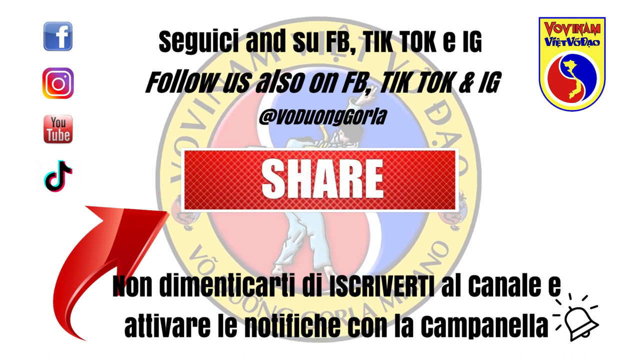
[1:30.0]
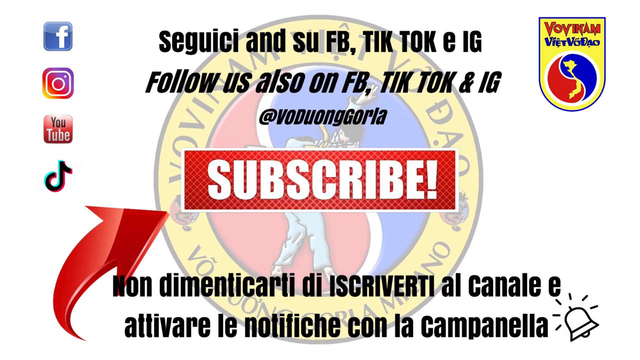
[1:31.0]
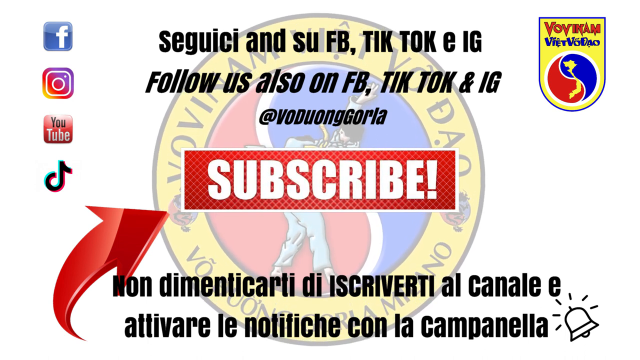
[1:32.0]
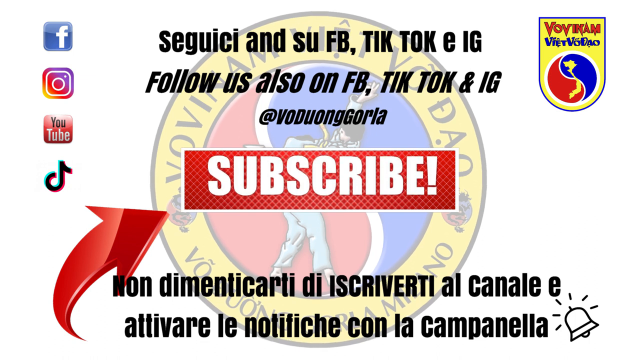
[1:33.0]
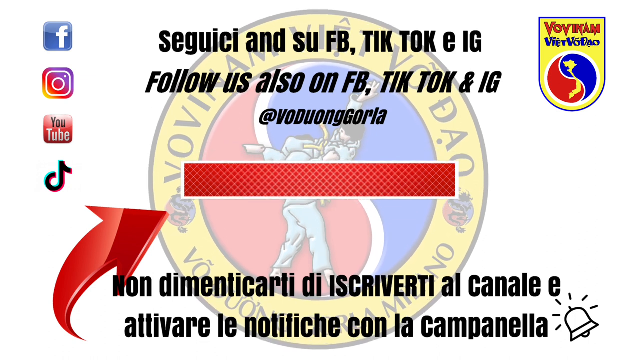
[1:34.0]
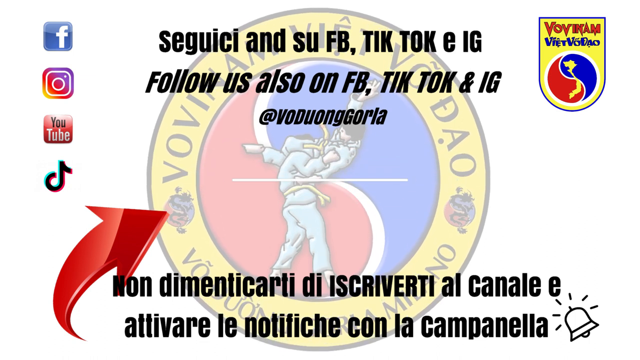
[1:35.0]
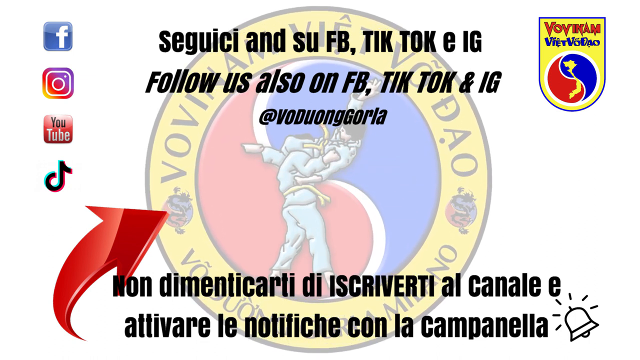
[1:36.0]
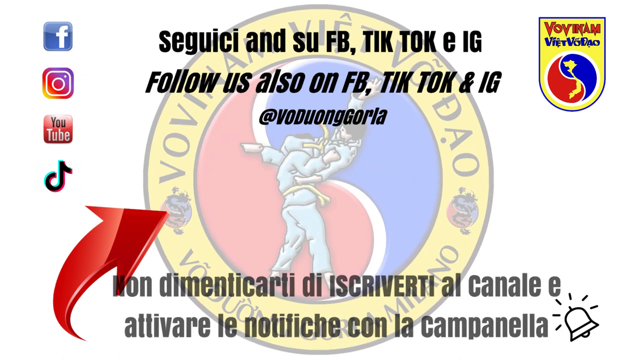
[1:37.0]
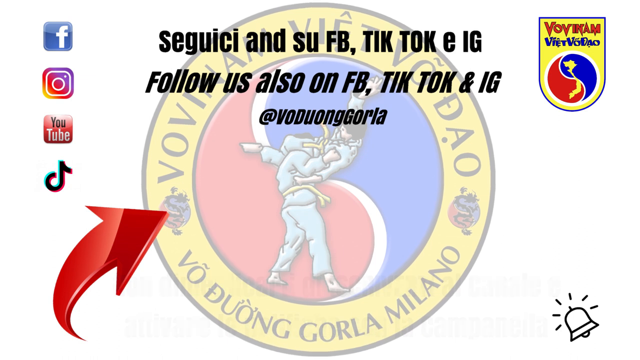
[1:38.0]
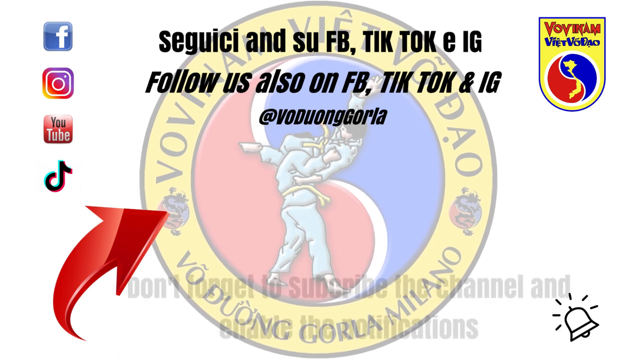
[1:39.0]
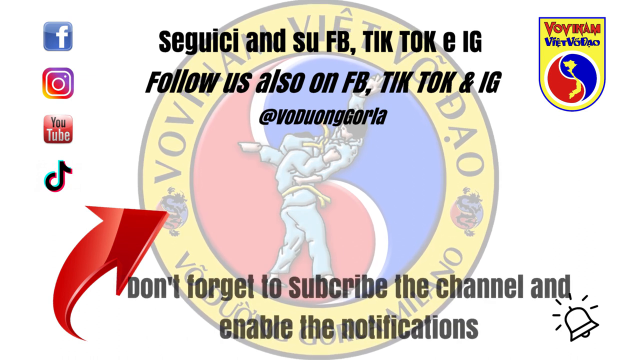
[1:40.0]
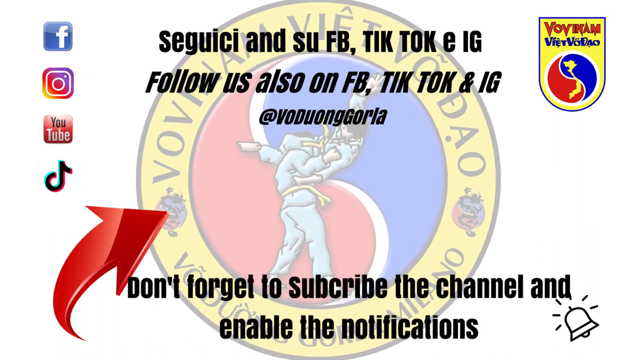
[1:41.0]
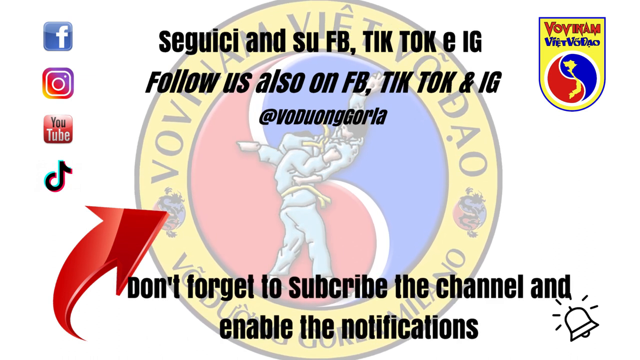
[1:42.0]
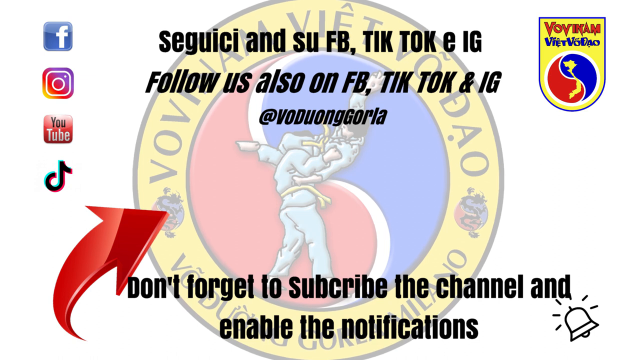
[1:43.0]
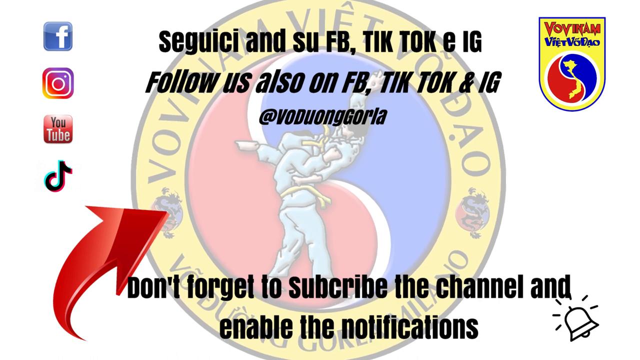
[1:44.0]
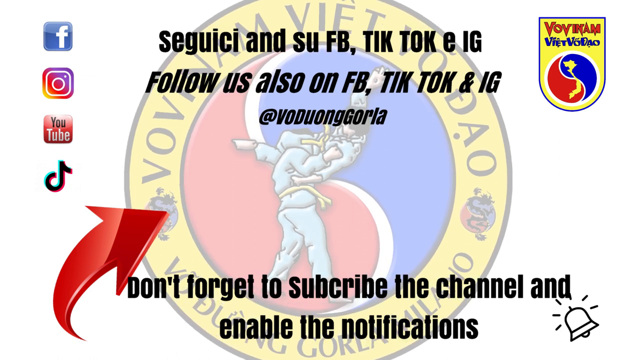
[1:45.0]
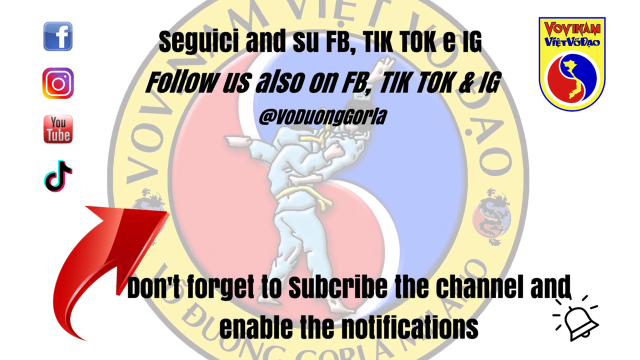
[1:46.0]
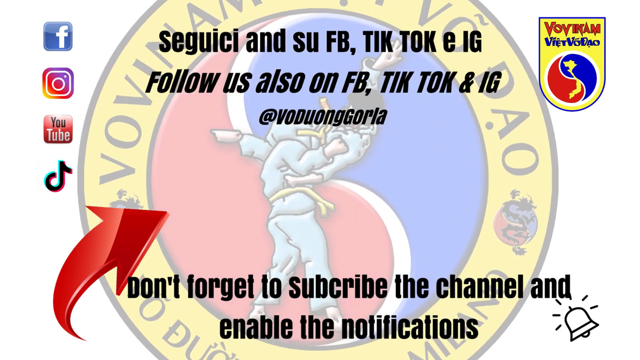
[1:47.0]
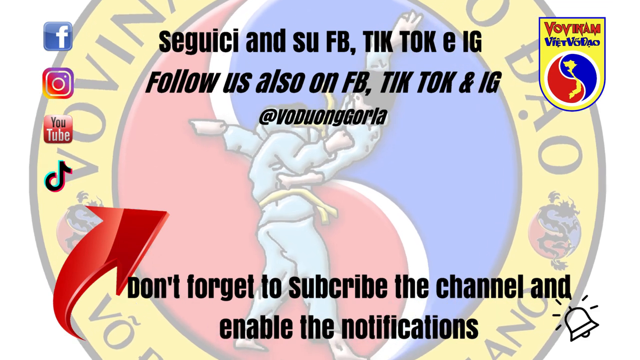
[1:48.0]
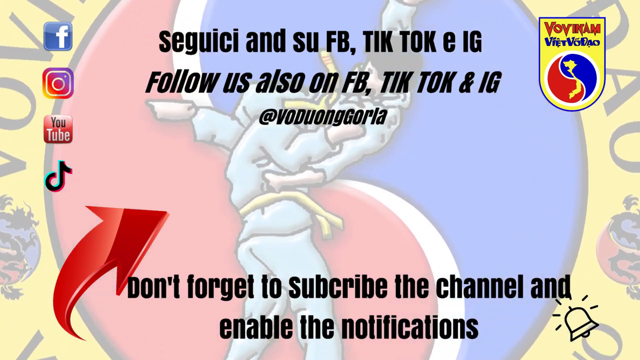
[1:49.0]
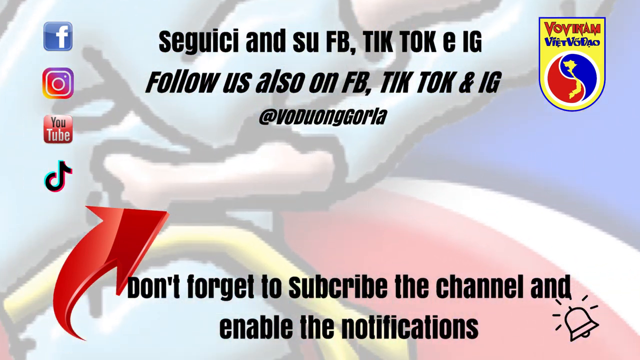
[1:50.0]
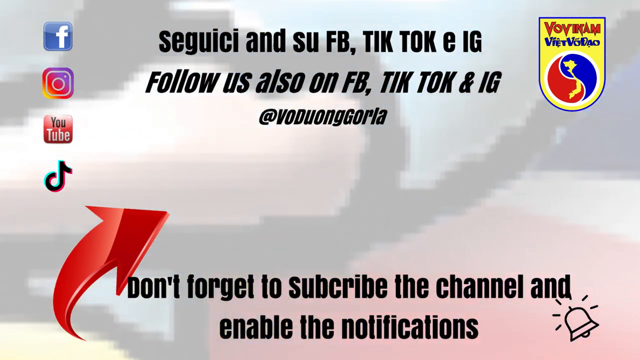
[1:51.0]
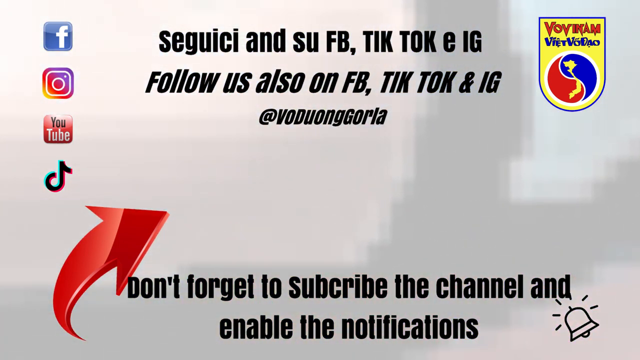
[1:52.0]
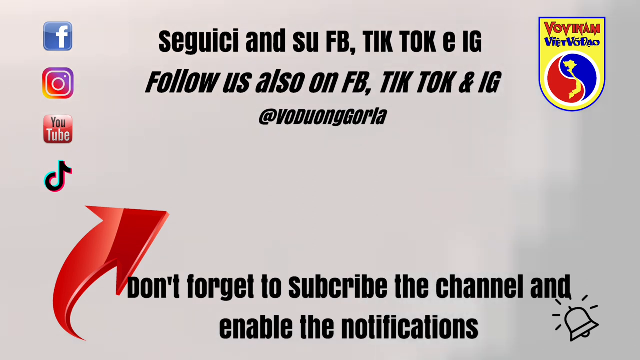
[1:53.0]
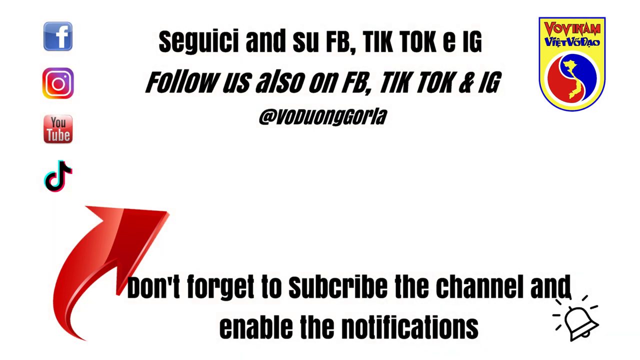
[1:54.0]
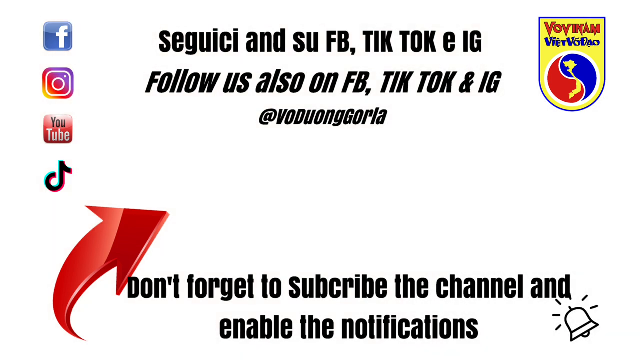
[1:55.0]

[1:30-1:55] Animated text appears with the logo of a Vietnamese martial arts society. The logo consists of two figures, one using her legs to put the other's head in a headlock, against a yin and yang background with one side red and one side blue. Italian and English text tells viewers to follow on Facebook, Instagram, TikTok and YouTube and asks them to subscribe to the YouTube channel, with an animation of a subscribe button. The emblem grows bigger on the screen, giving a close-up of the two figures in its centre.